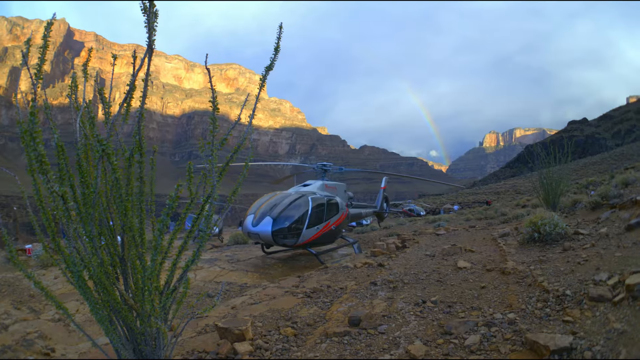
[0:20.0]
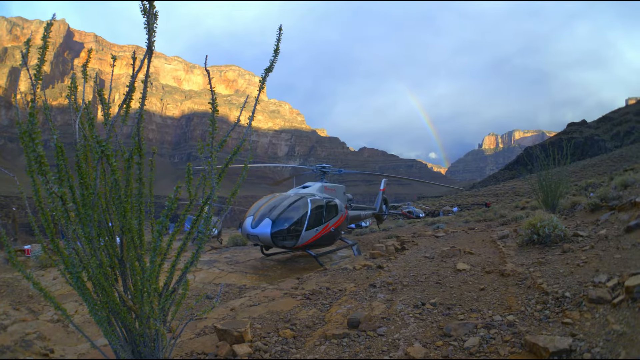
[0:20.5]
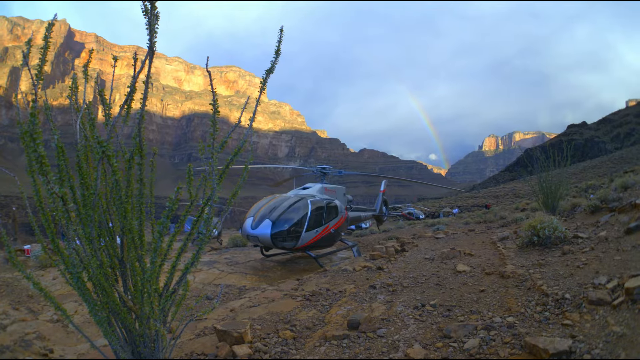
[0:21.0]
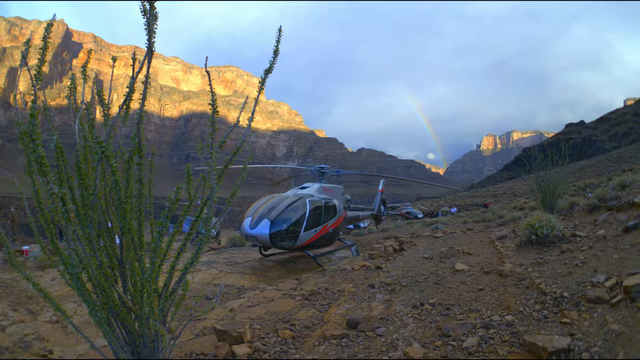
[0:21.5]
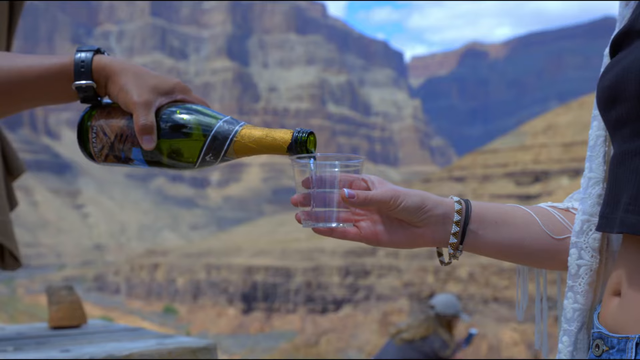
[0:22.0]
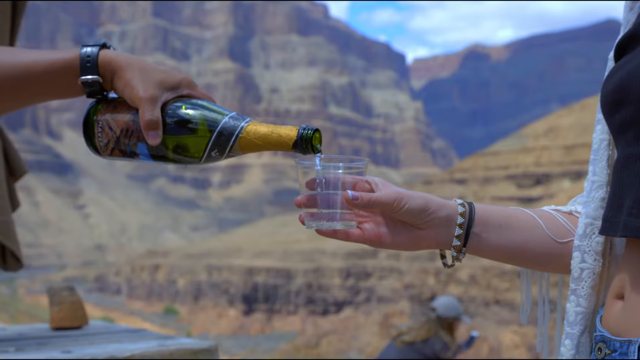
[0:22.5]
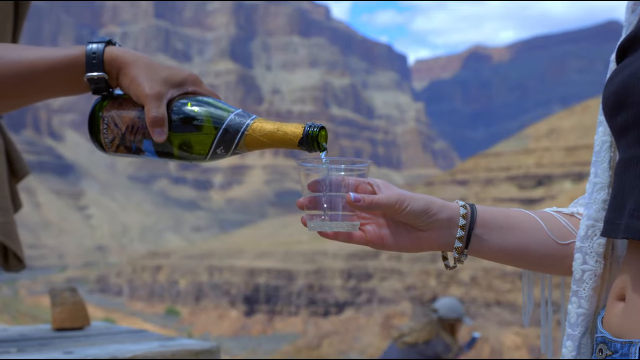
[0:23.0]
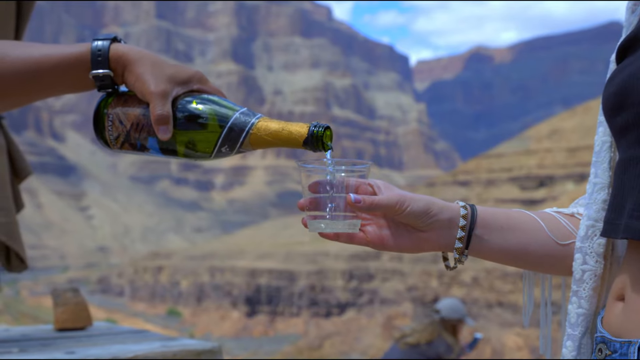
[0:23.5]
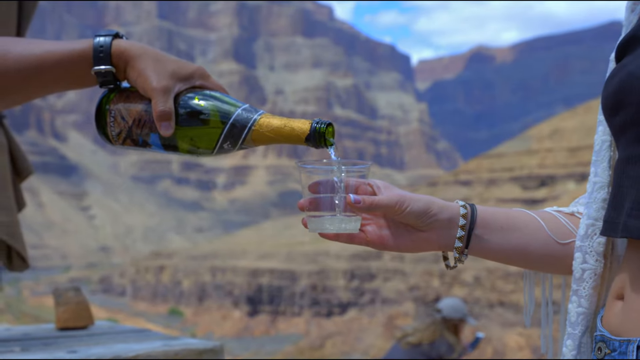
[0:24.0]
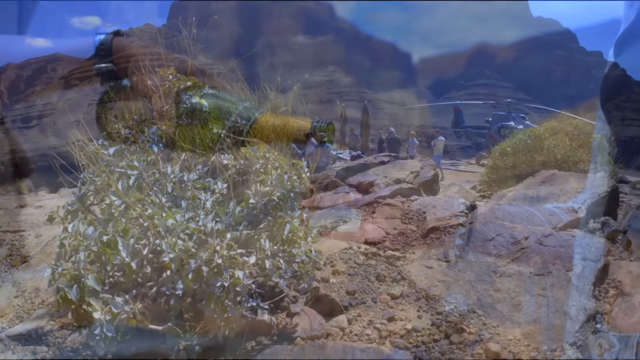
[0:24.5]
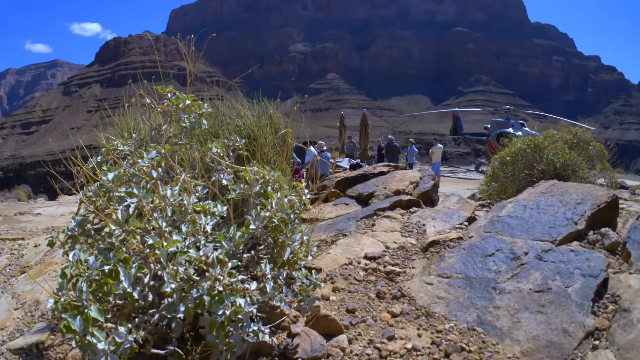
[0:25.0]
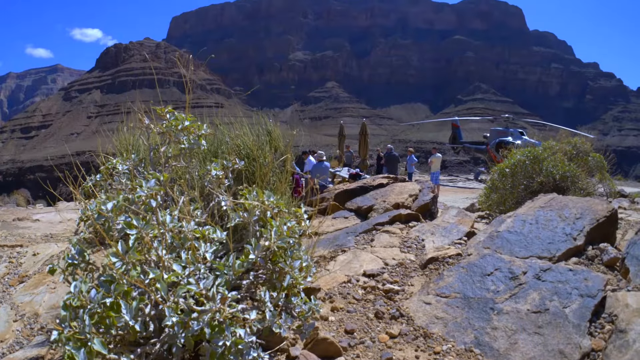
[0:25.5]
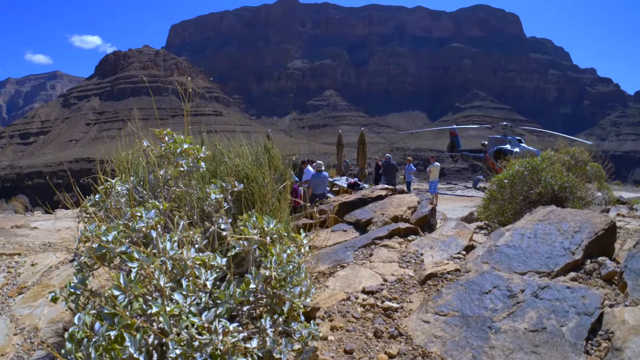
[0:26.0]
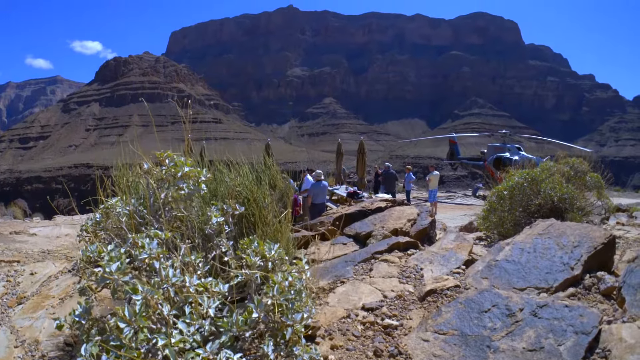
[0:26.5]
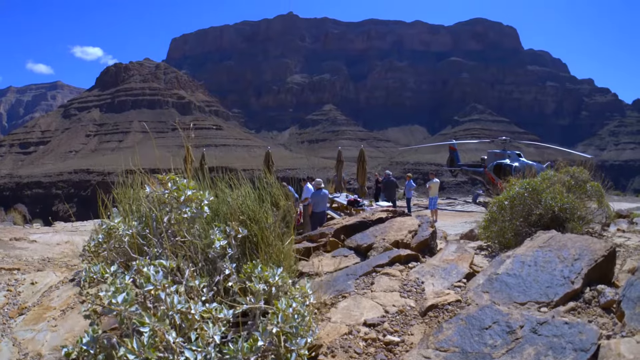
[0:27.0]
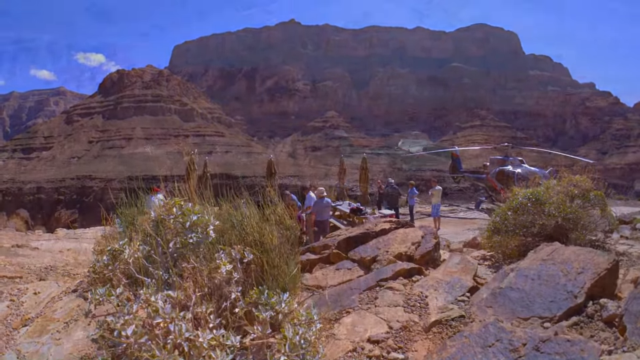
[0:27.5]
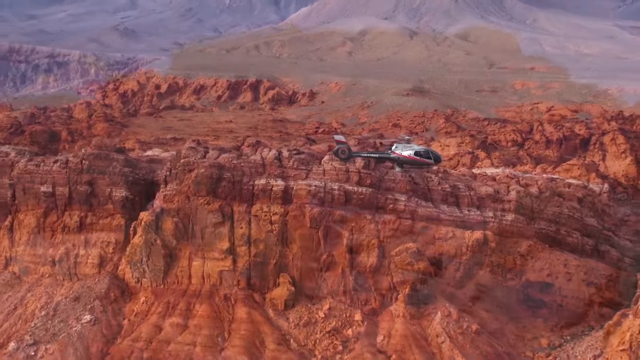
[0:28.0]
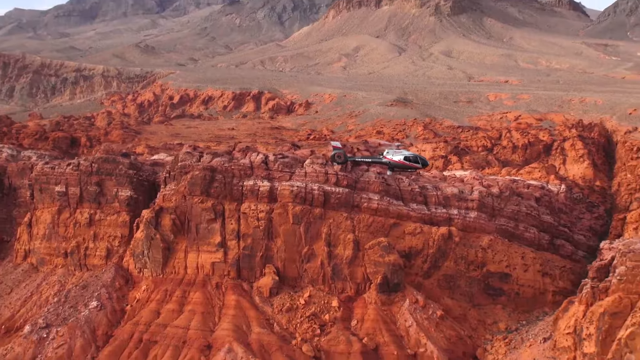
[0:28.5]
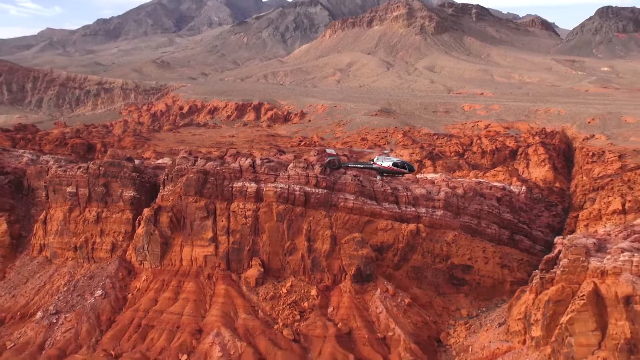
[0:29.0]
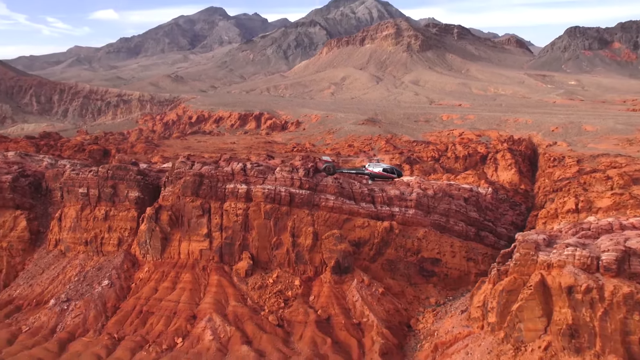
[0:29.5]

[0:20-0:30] The helicopter rests at a place with people outside. One woman pours a glass of champagne for another woman, and in the background is the rugged terrain of the carved-away canyon. The people are relaxing and having a good time. The camera pans back to show a group of people standing amid the natural scenery. The helicopter then flies inside the canyon, which has a colorful reddish glow, probably at sunset or sunrise.